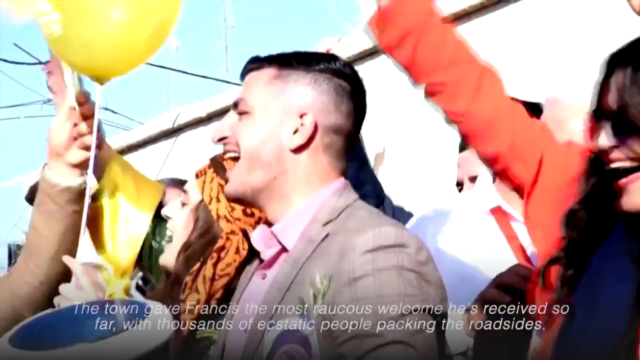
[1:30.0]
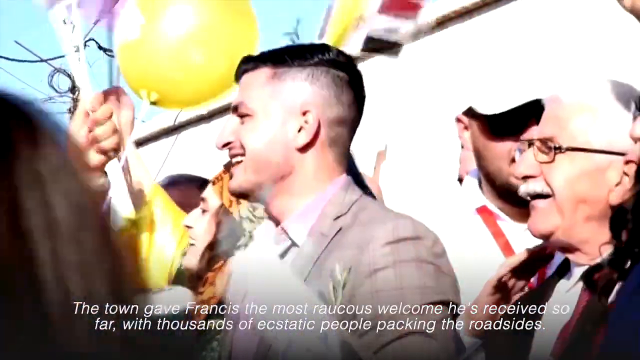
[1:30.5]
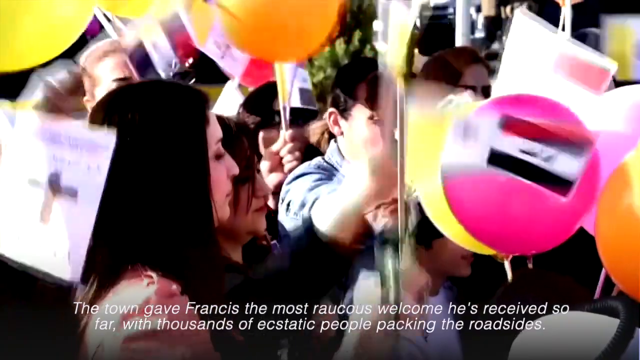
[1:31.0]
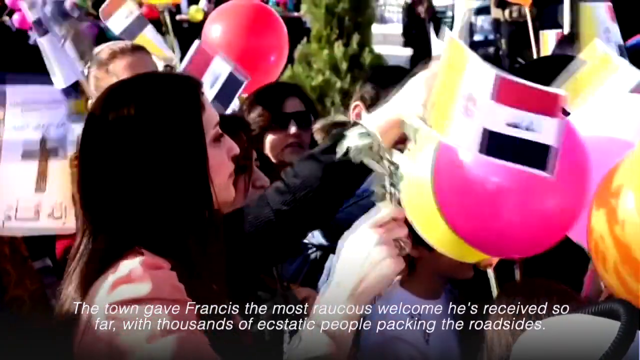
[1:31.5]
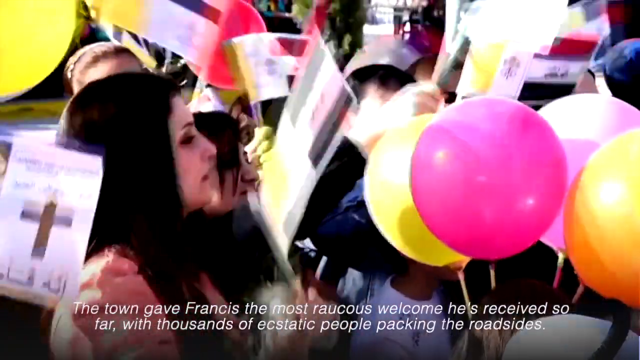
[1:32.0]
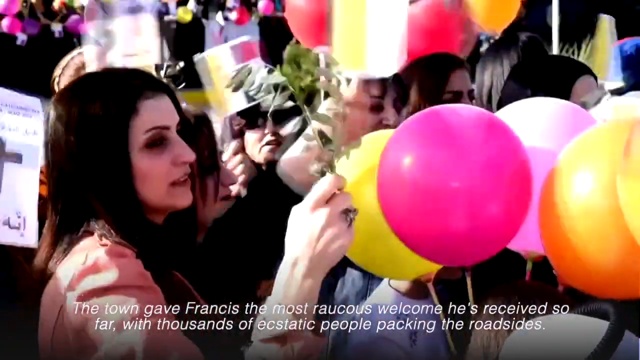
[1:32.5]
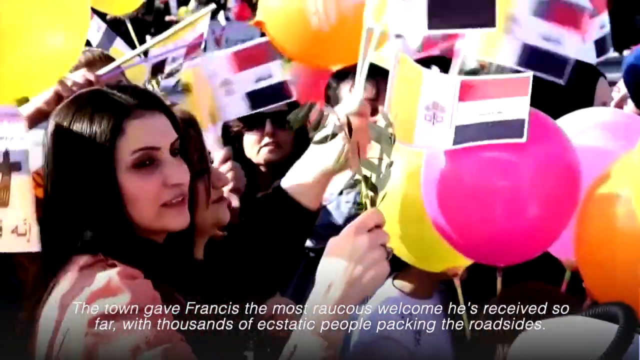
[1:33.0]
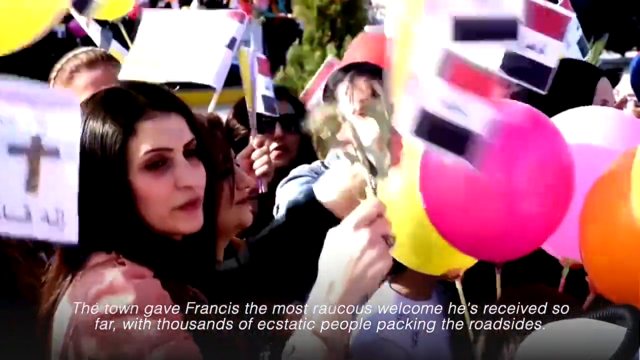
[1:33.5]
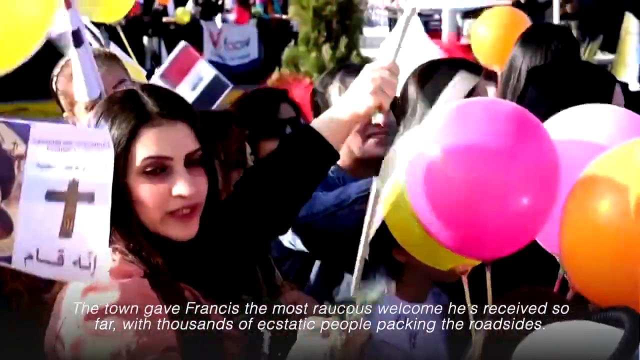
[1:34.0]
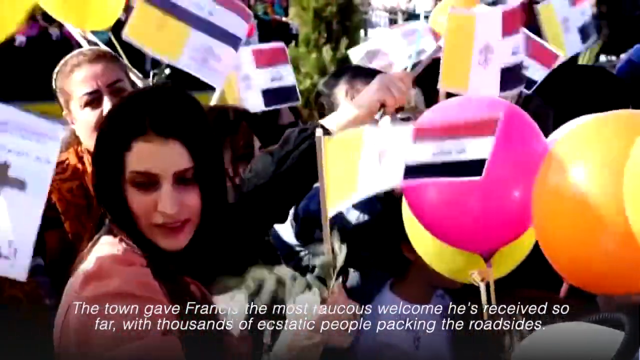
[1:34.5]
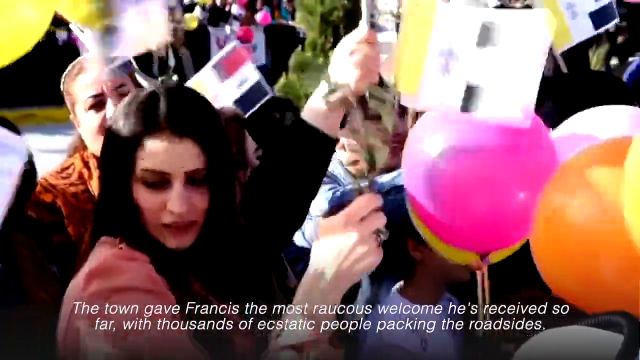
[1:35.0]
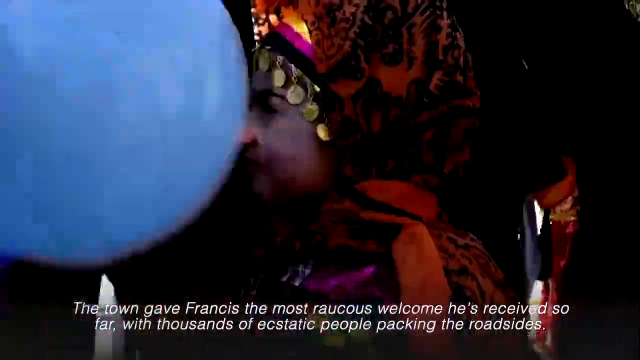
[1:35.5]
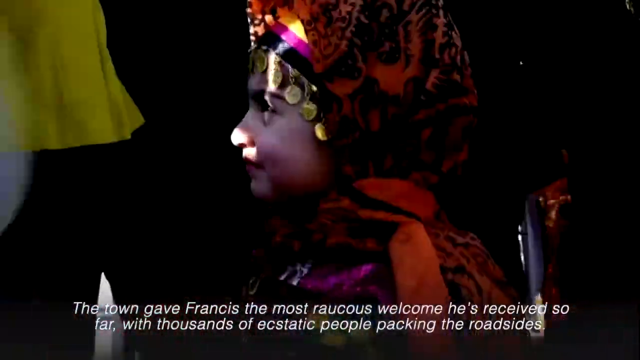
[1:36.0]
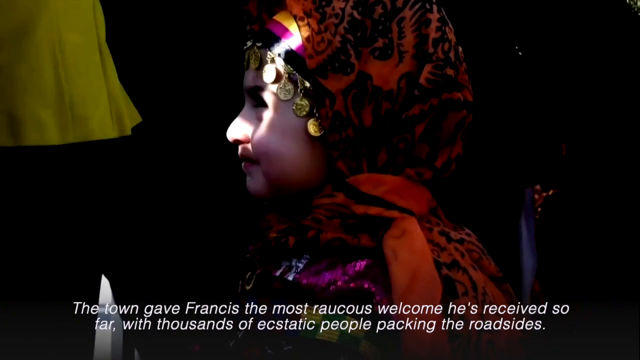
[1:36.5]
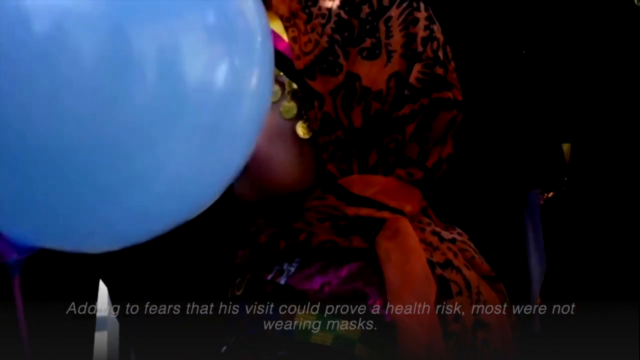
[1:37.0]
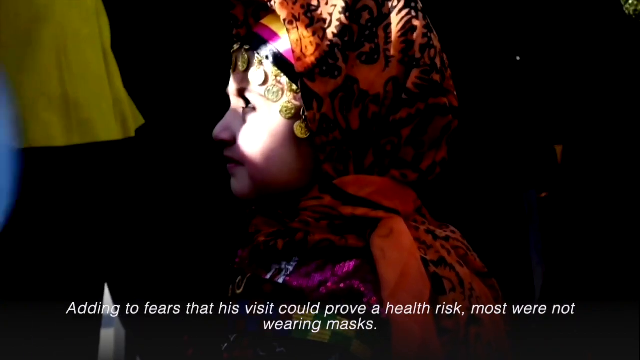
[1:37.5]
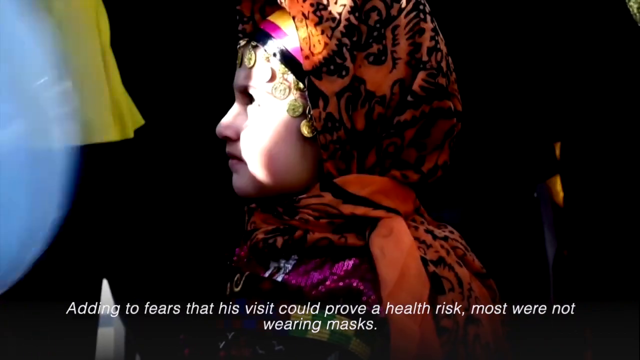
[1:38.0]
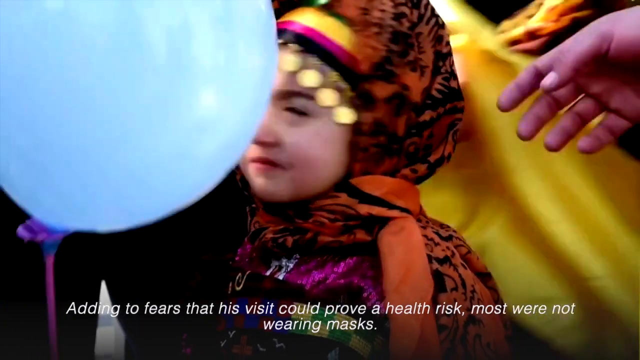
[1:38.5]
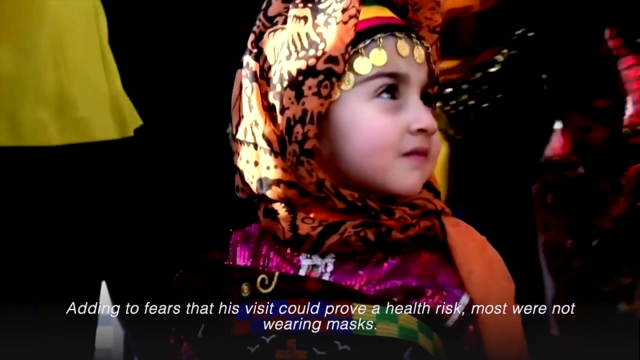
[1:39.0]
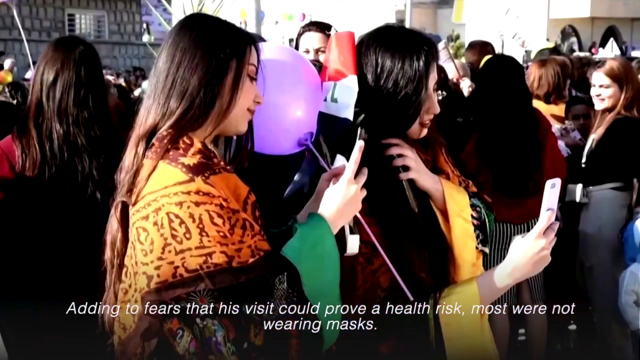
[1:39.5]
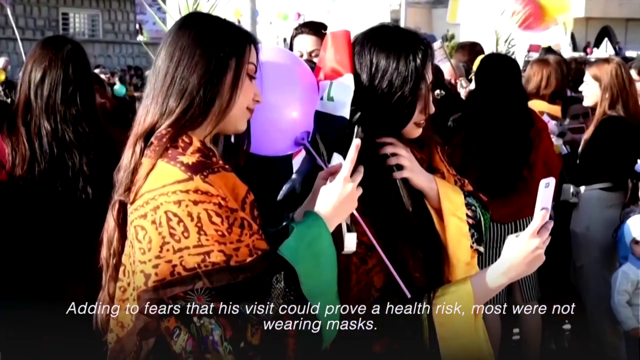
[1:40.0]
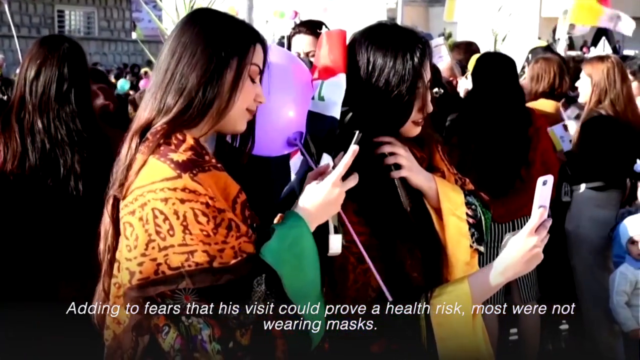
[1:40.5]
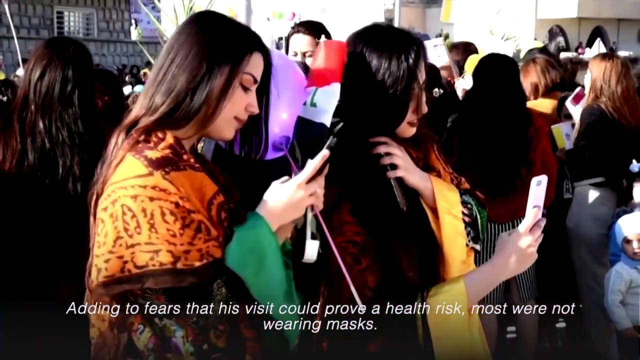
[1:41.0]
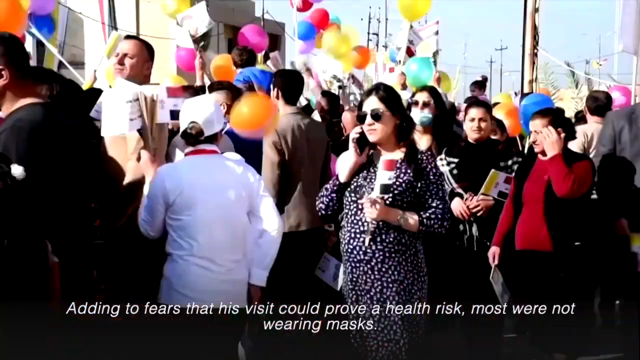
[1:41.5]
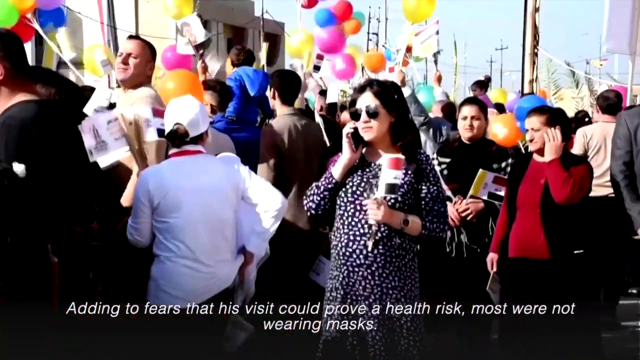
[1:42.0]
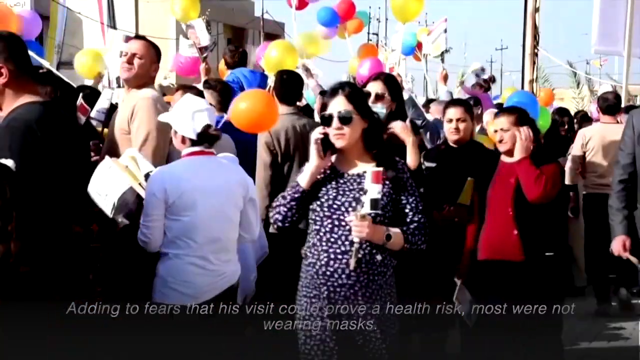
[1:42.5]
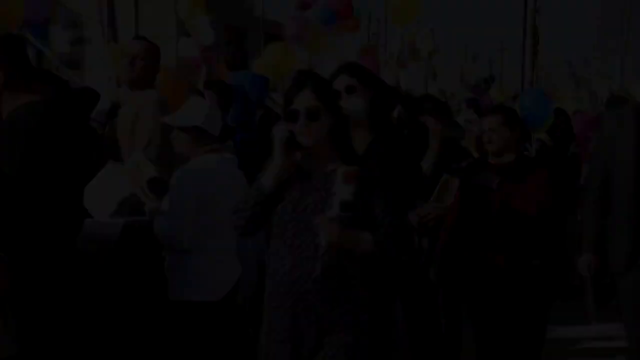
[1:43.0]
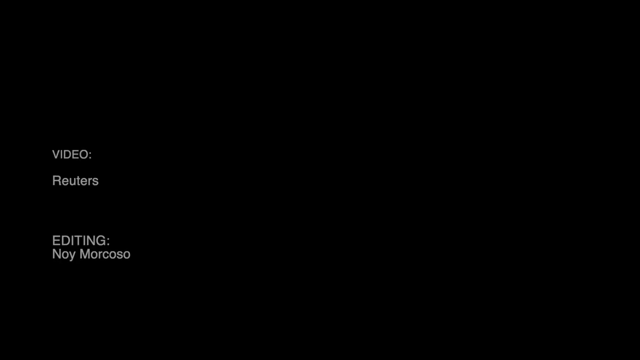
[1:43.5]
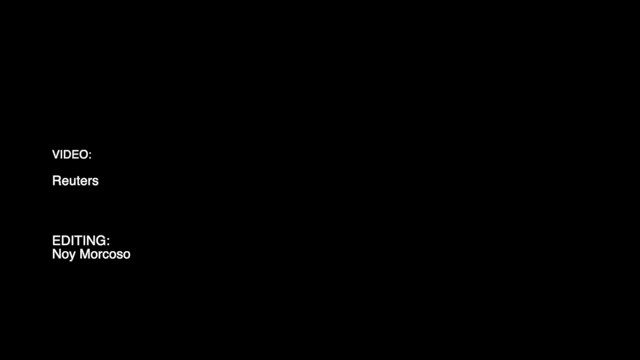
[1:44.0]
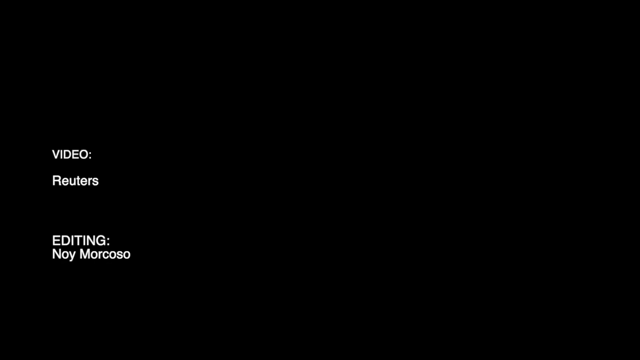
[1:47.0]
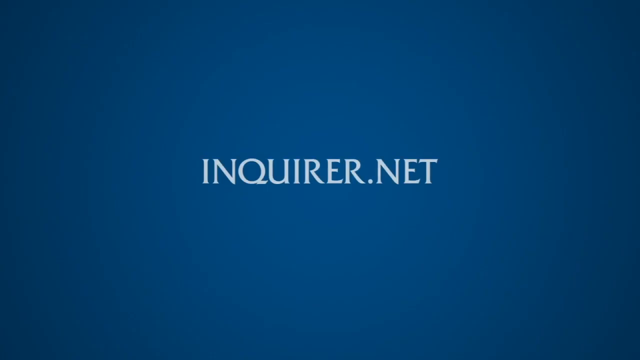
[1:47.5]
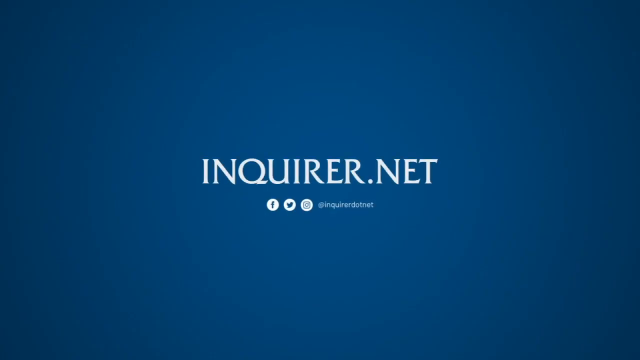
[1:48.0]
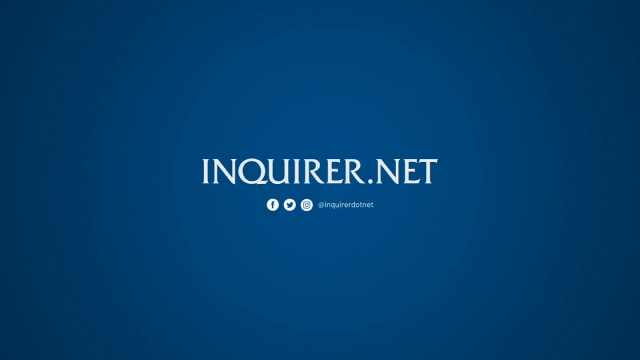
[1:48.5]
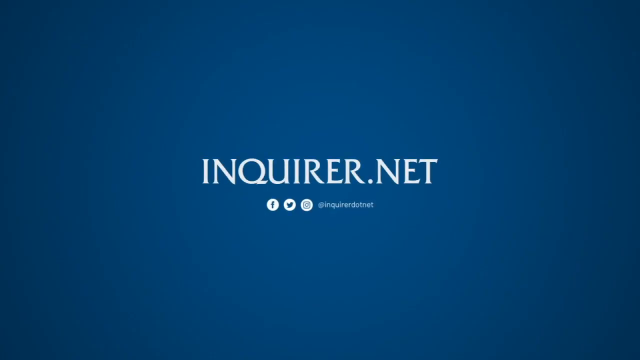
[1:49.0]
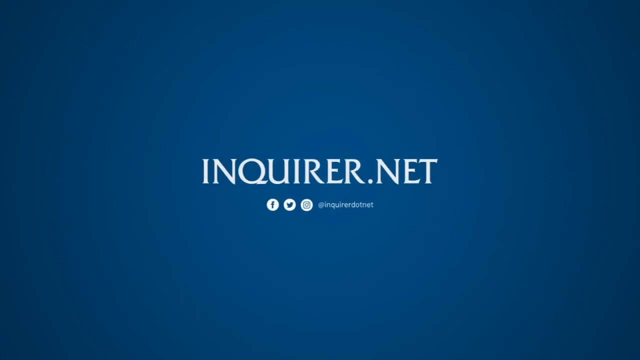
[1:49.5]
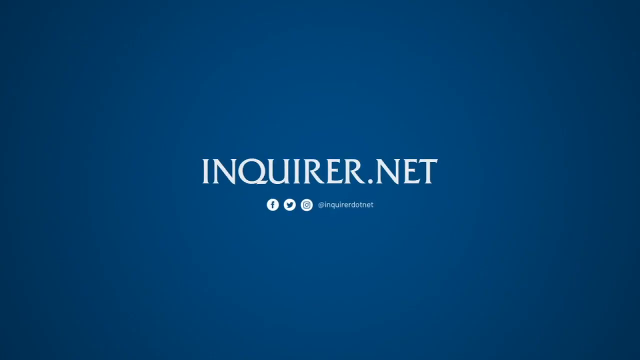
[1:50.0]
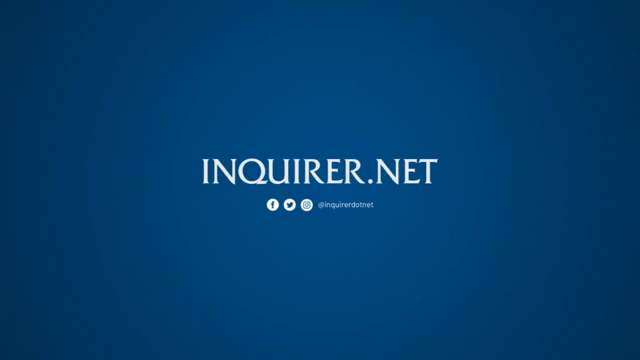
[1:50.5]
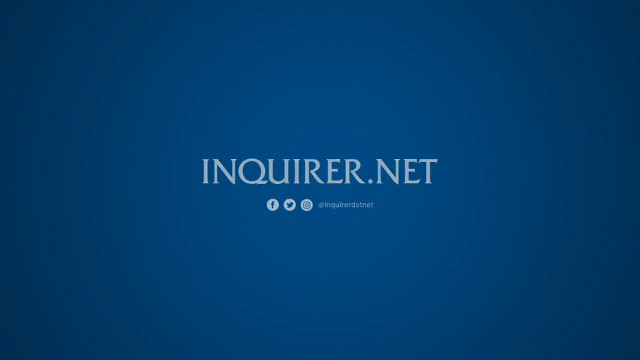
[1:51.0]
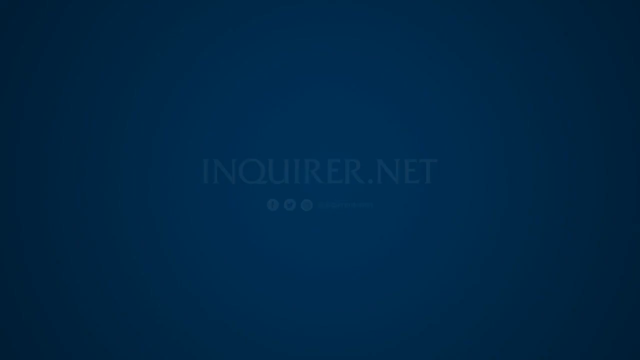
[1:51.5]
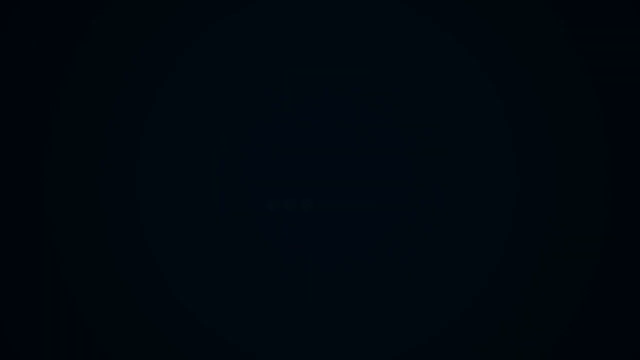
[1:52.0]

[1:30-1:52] Various people in the audience cheer and wave flags around; the flags are apparently Iraqi flags, the national flag of Iraq. The crowd is dense and packed in. A lot of people also have balloons, some of them pink, orange or yellow. There seems to be kind of a color scheme among people, with a lot of orange, though other colors are mixed in as well. A child is dressed in an orange sash kind of outfit. Various shots show audience members on their phones, looking distracted. Everyone in the crowd looks pretty happy, though not exactly ecstatic. White text on a blue screen shows "inquirer.net", apparently the source of the video.